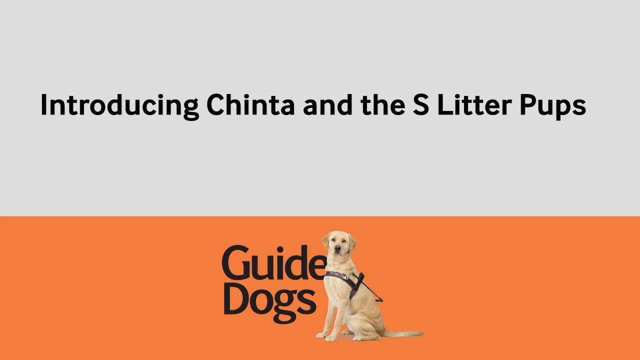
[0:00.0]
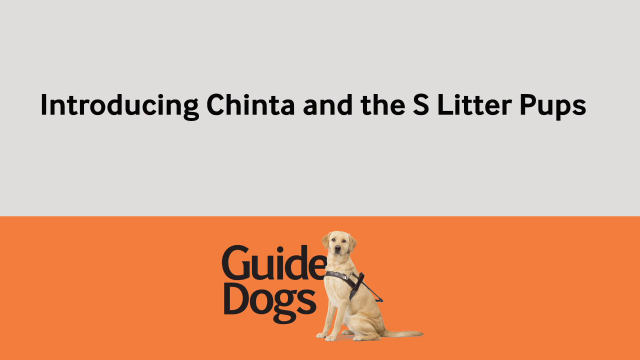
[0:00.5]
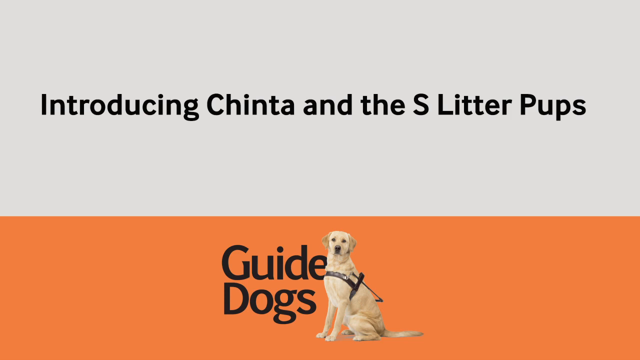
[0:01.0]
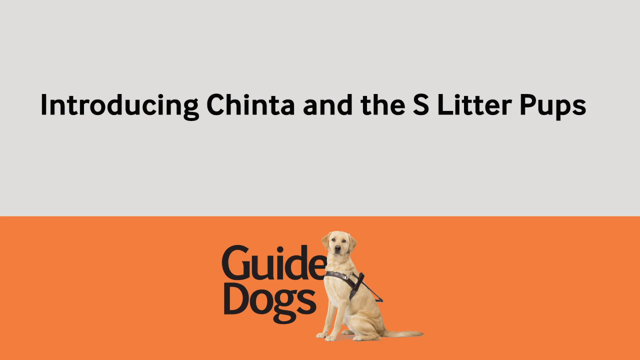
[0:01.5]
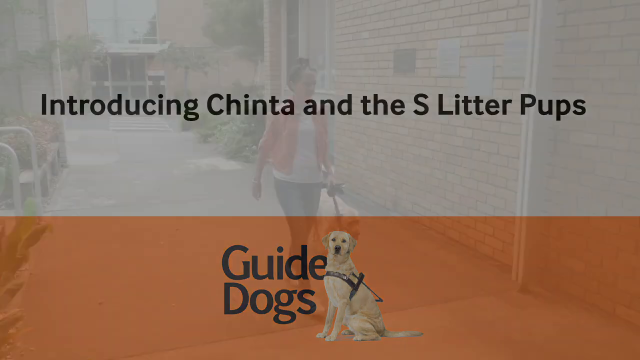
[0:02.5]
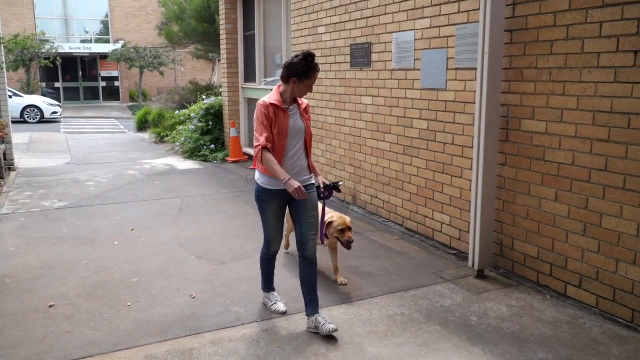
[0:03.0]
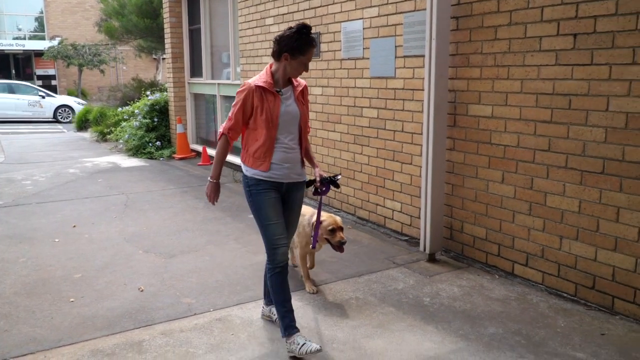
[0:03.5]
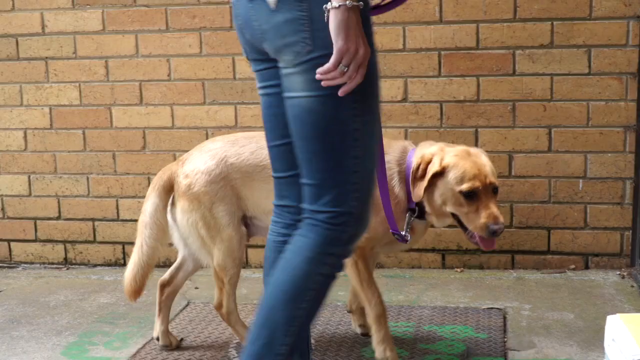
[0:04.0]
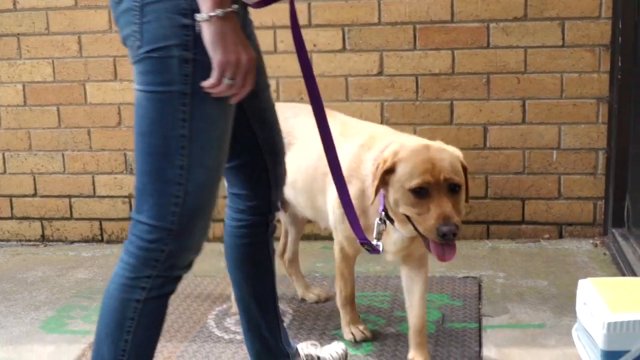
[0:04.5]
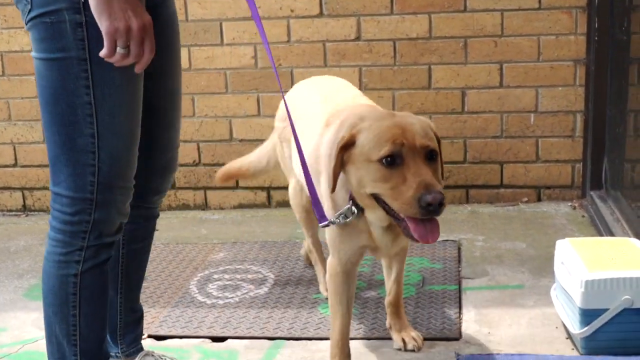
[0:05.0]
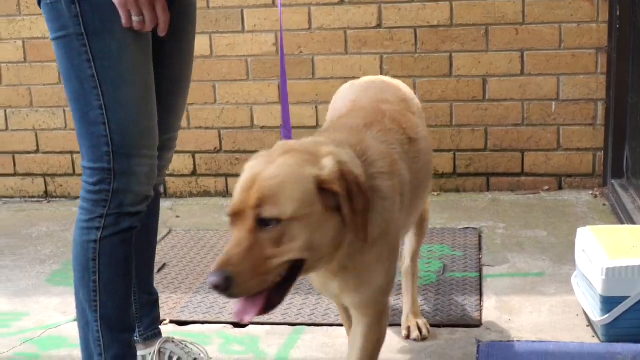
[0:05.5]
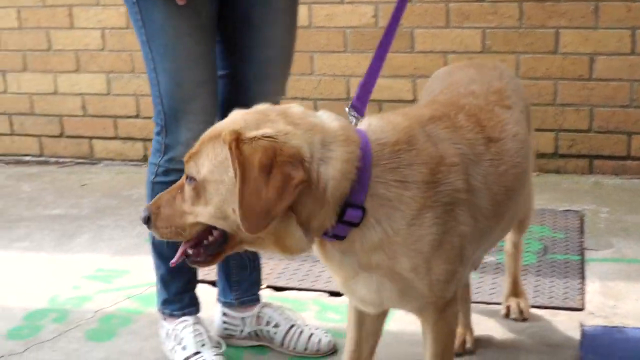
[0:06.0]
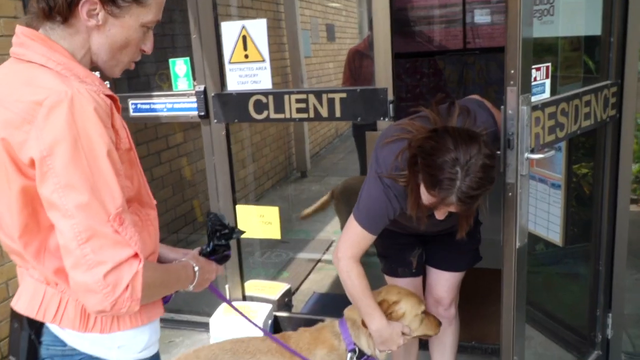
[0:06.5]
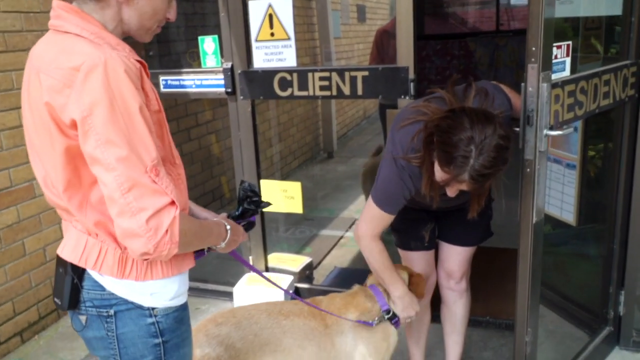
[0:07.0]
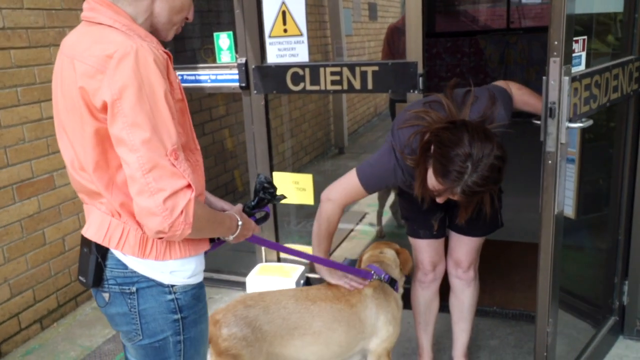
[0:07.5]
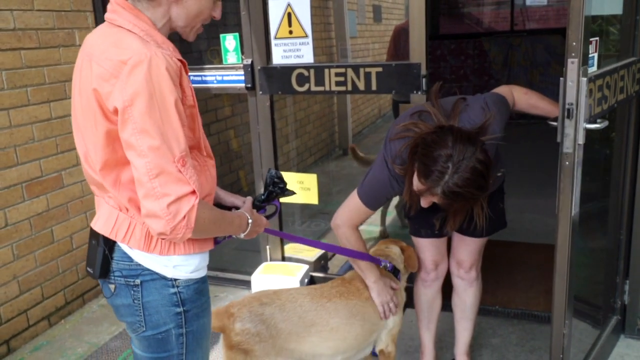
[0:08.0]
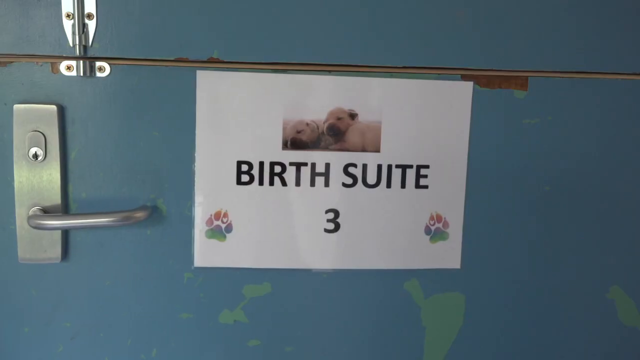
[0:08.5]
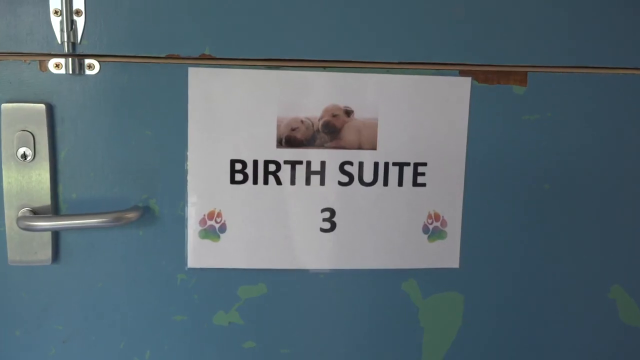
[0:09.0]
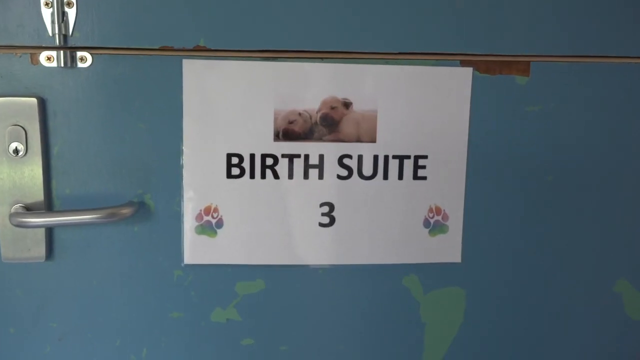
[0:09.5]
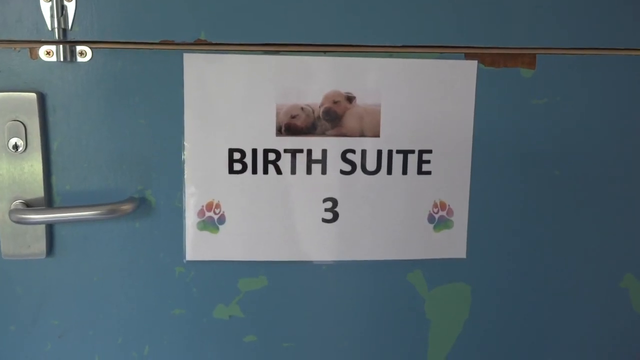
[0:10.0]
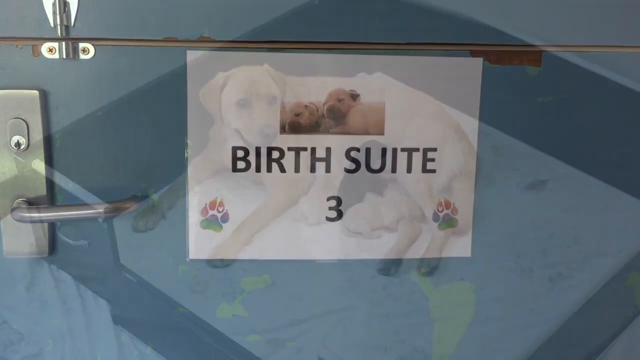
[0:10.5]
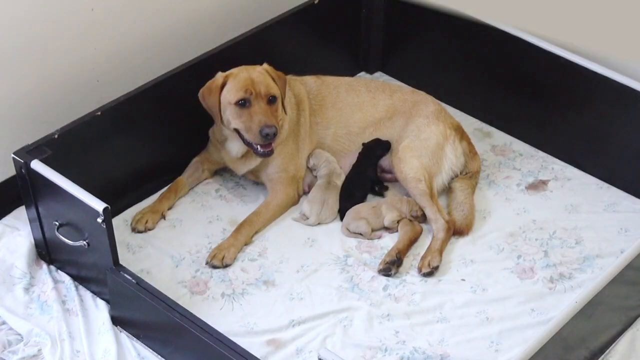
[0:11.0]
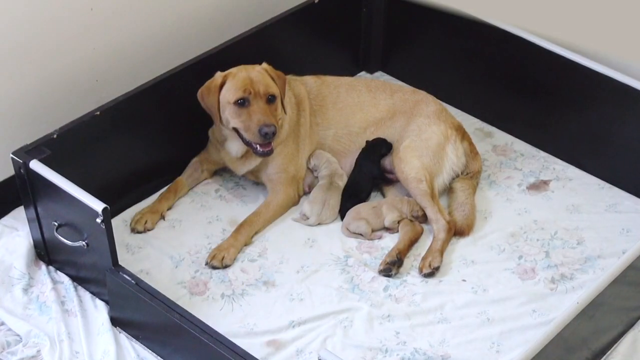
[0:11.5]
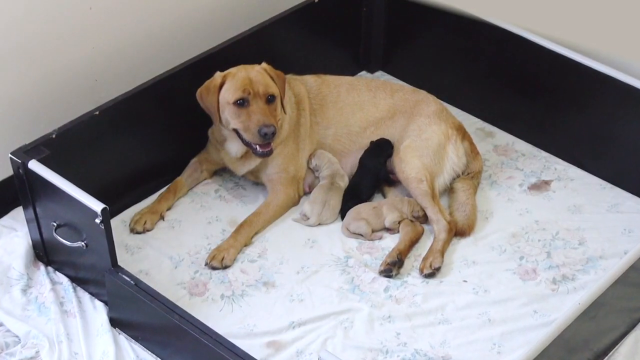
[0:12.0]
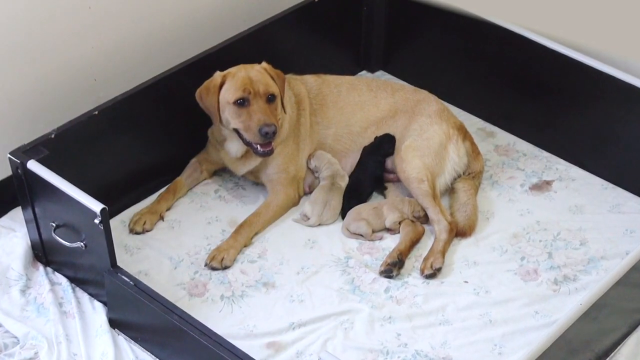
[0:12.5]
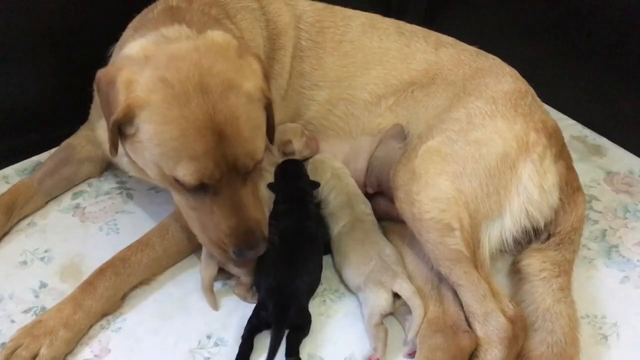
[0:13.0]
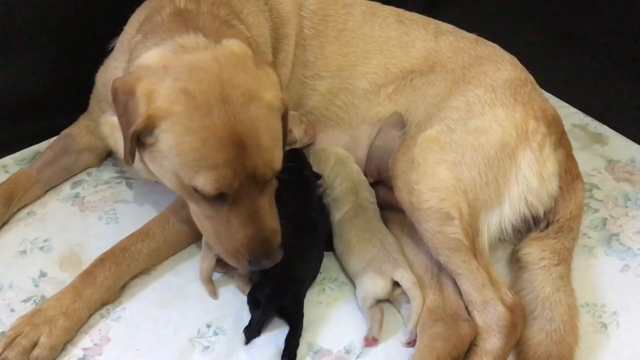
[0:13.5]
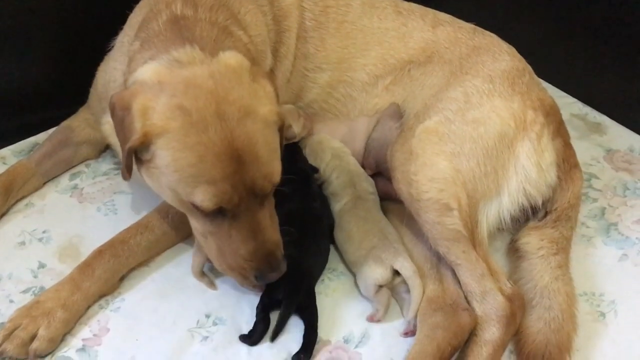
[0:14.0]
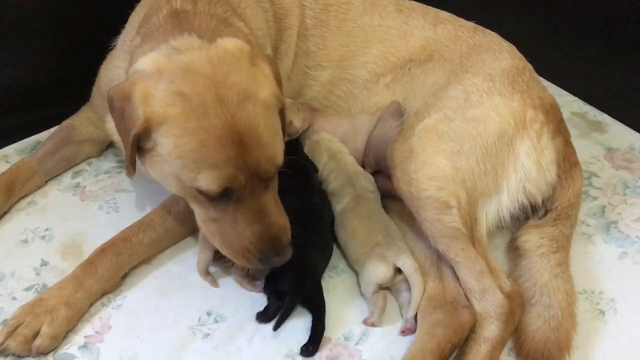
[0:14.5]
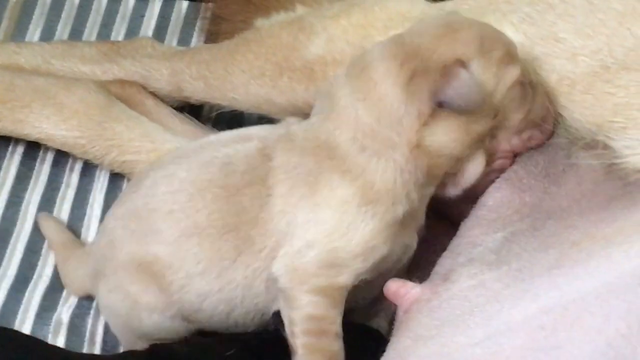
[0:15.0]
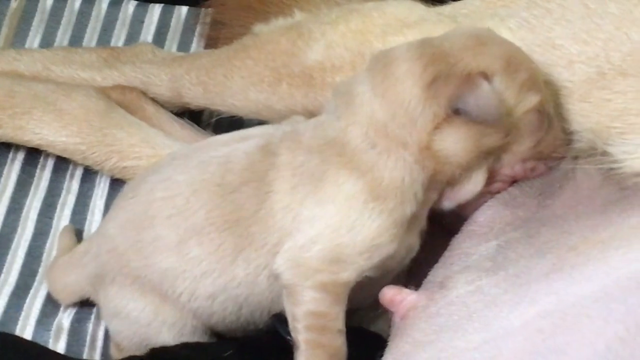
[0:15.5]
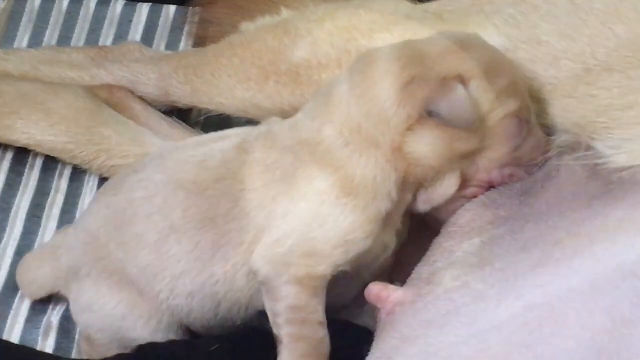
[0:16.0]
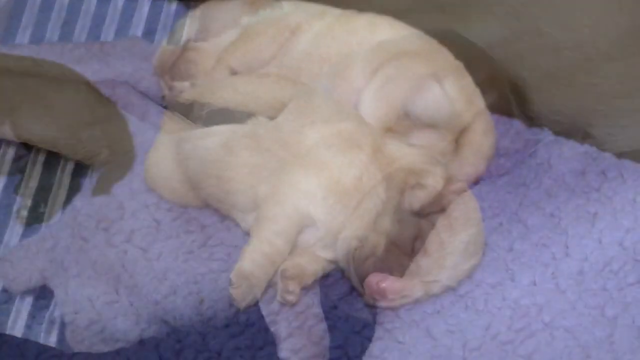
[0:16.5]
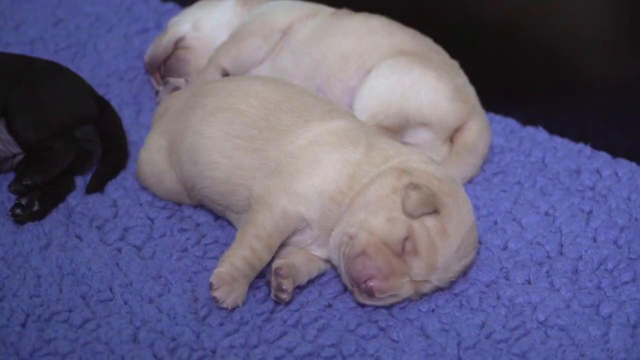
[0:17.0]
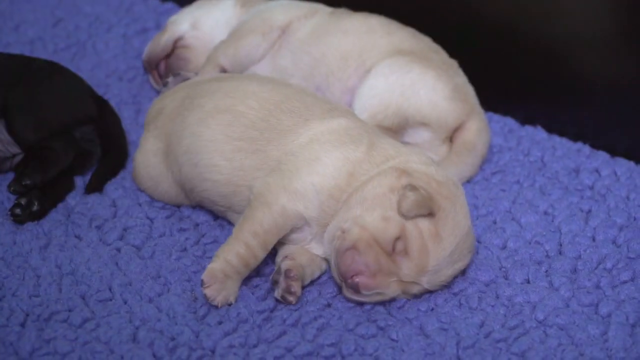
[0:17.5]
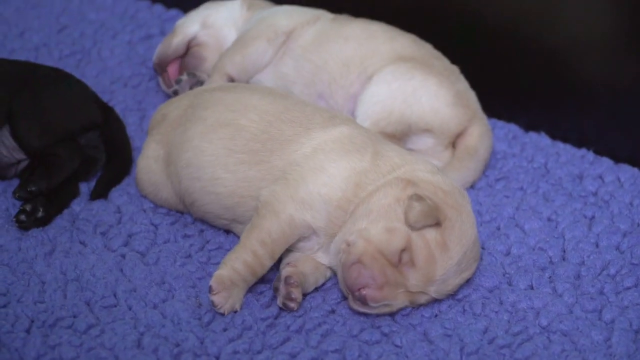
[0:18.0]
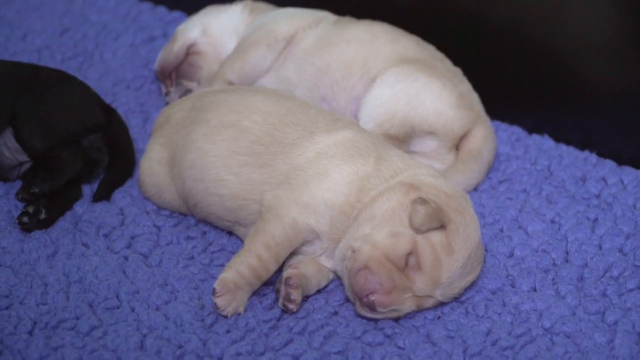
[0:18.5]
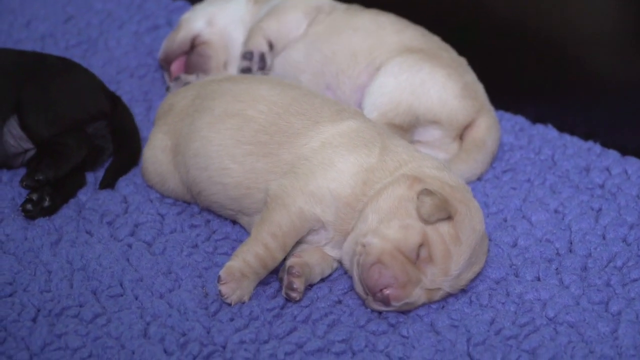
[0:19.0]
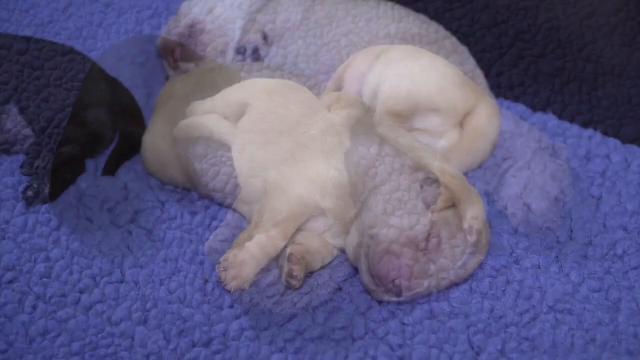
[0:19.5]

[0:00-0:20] The video is titled Introducing Chinta and the S-Litter Pups. It begins with a woman in a built-up area bringing a guide dog on a lead into a building. The dog is either a golden retriever or a Labrador. The woman wears blue jeans, trainers and a sort of pink jacket, and she is apparently dropping the dog off at the vets. The scene moves into what is termed Birth Suite 3, where a golden retriever has given birth to three puppies; she is possibly the dog seen earlier. Two of the puppies are golden and one is jet black. The newborns feed on her teats. They have very small noses and legs, are quite chubby around the face, and relax and doze on a purple blanket.